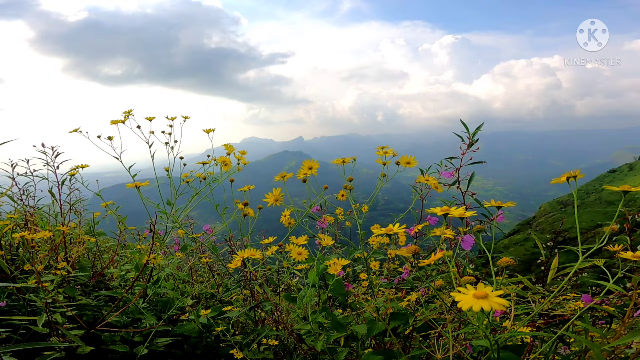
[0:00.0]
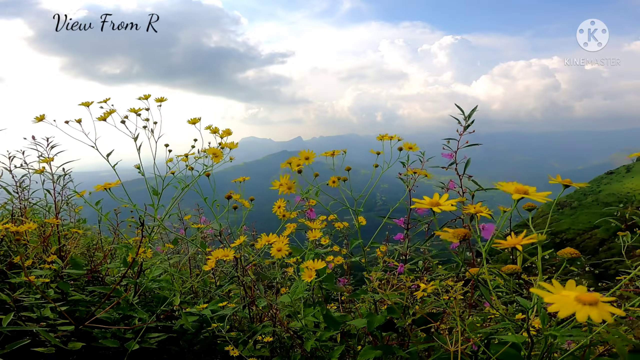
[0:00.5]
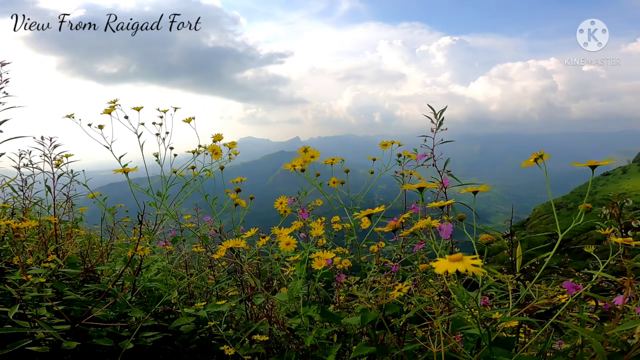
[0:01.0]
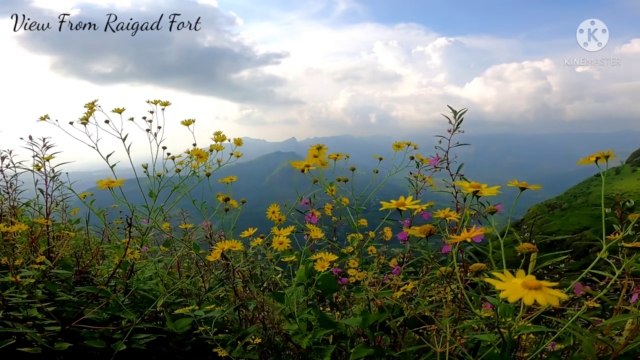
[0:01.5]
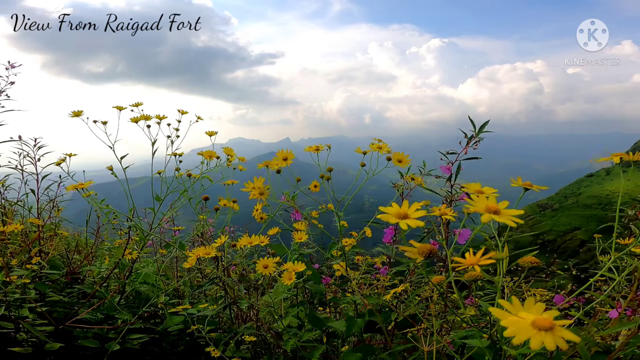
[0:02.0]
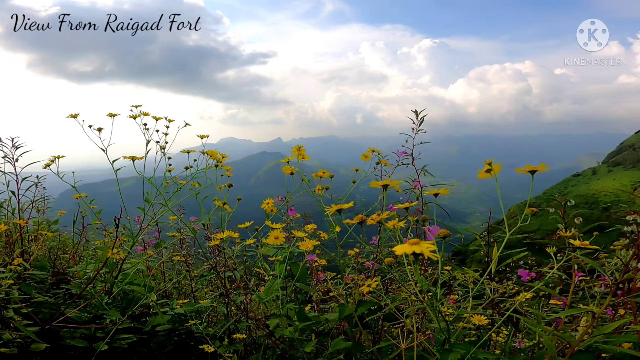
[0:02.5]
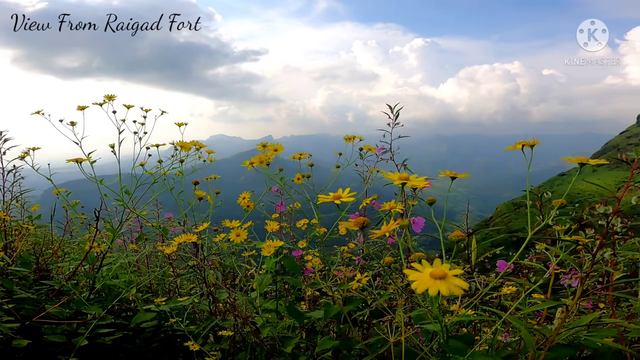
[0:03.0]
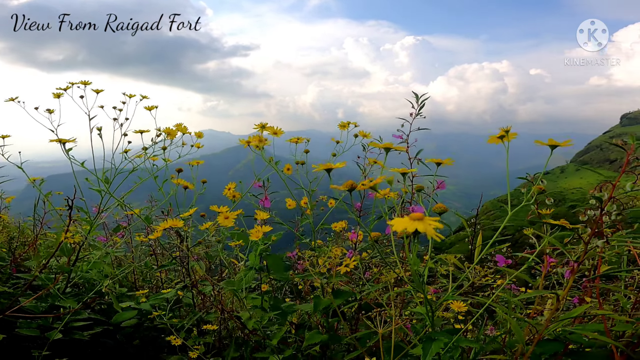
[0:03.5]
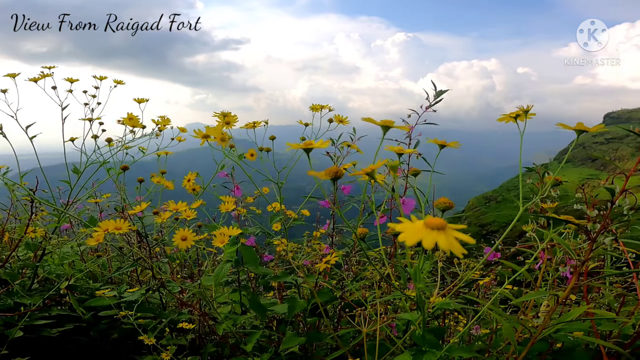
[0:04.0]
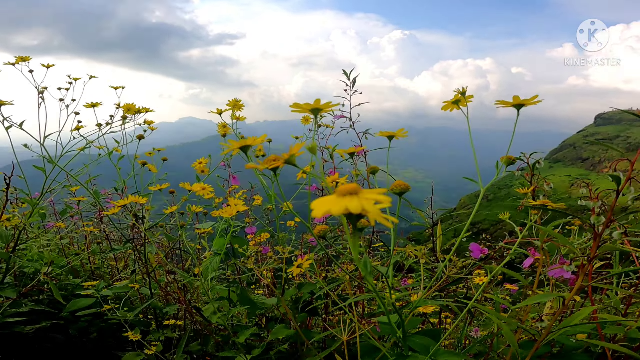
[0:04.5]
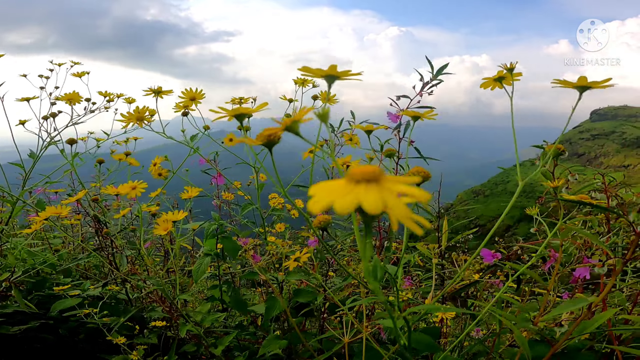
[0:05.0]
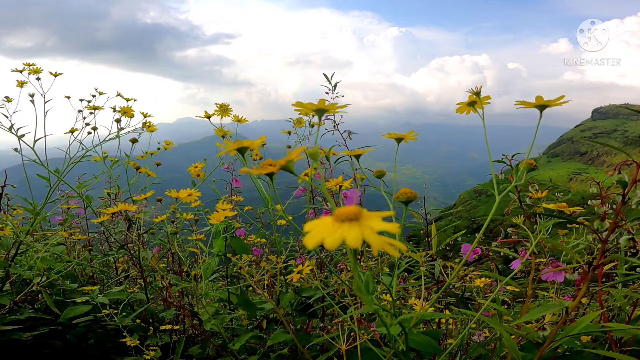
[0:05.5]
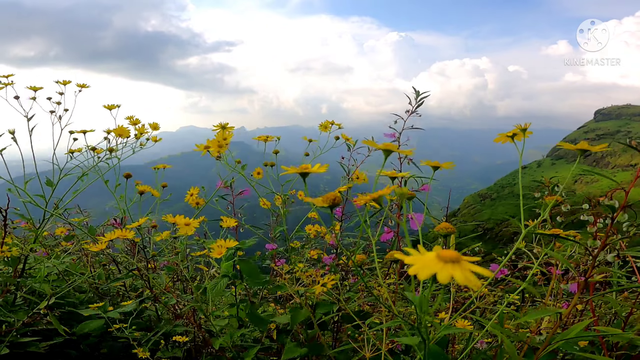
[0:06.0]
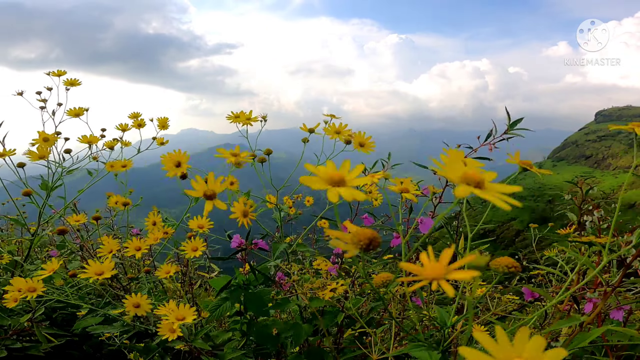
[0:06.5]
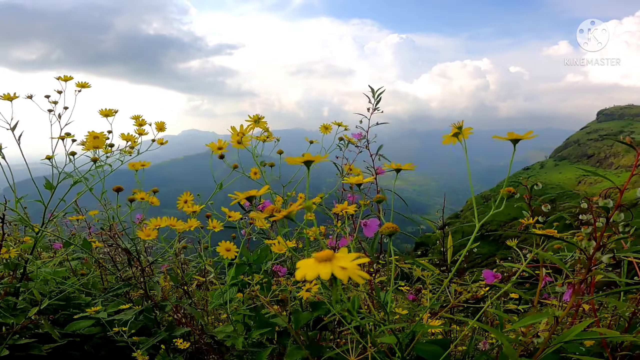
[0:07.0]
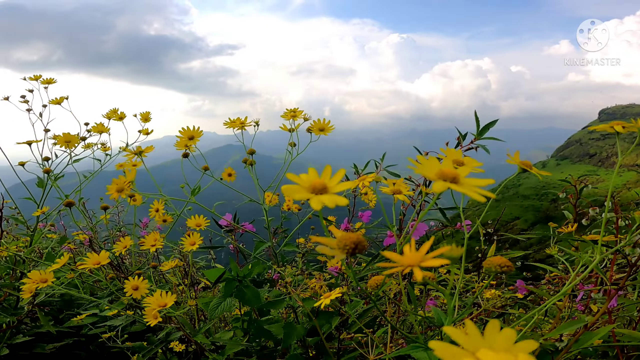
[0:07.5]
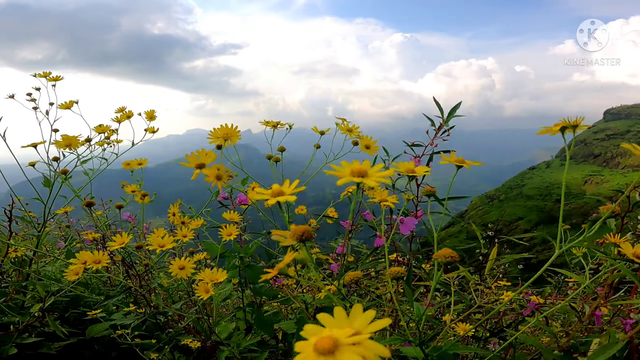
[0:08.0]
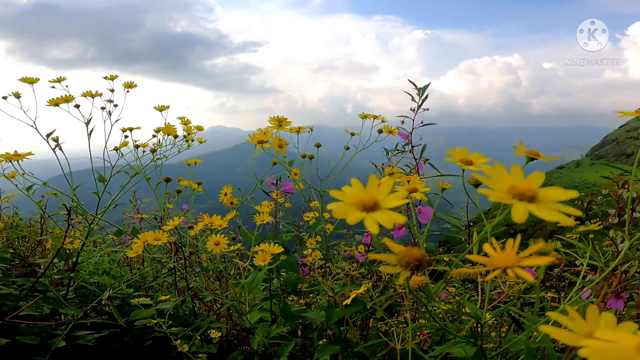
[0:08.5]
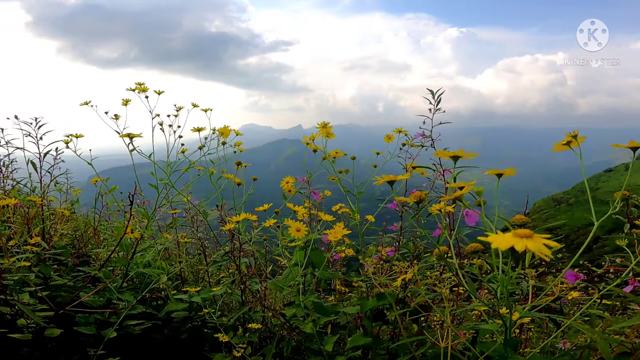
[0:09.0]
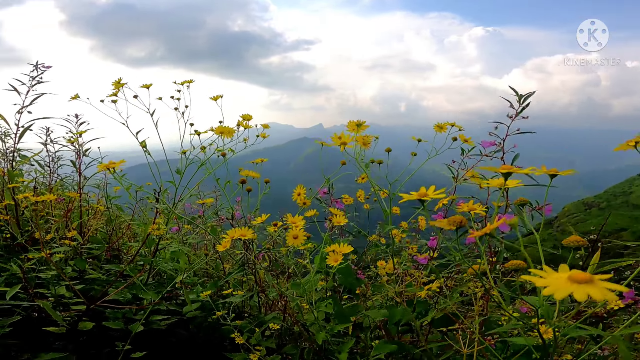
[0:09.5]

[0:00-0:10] A bushel of sunflowers blows in the wind. In the background are at least two mountainsides and a sky full of clouds. The sunflowers in the foreground are mixed with various weeds and some purple flowers, and the environment is very green.